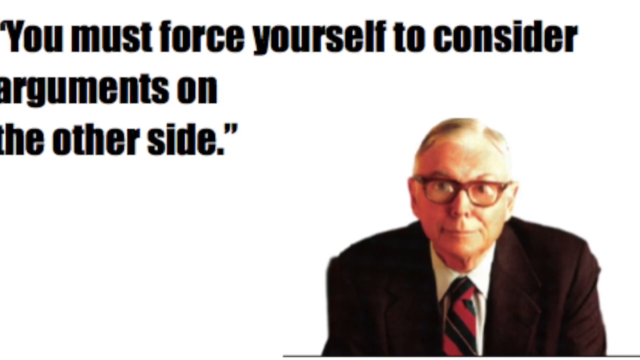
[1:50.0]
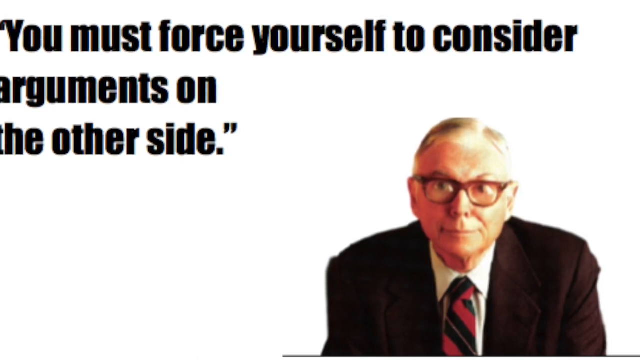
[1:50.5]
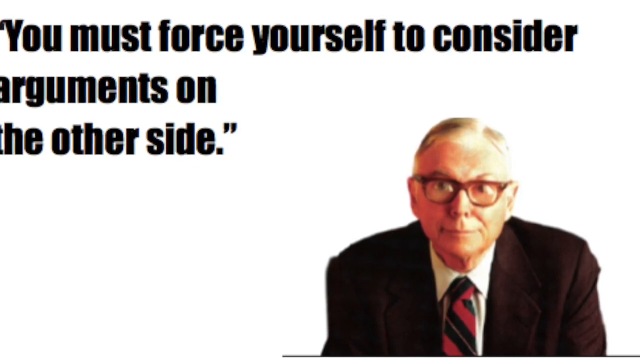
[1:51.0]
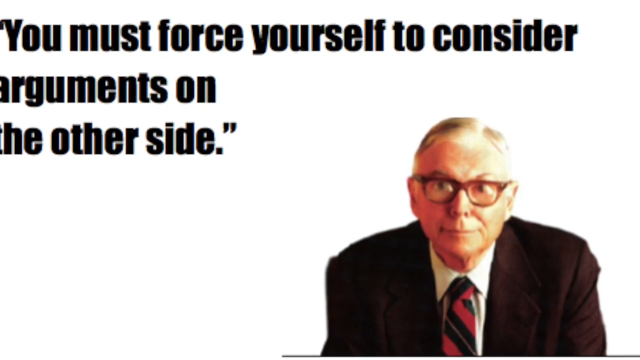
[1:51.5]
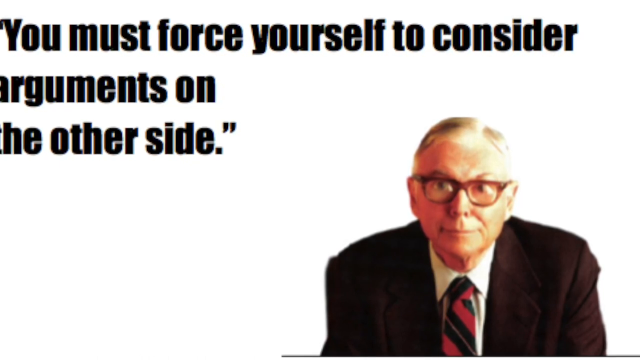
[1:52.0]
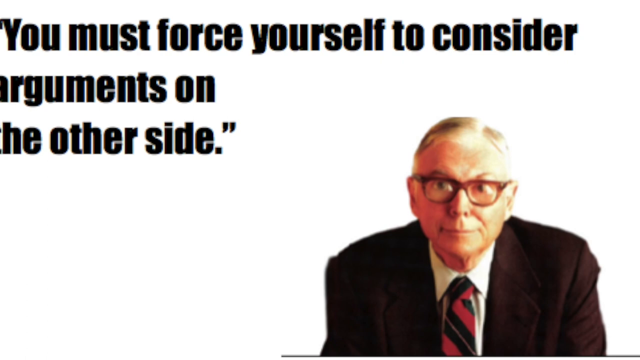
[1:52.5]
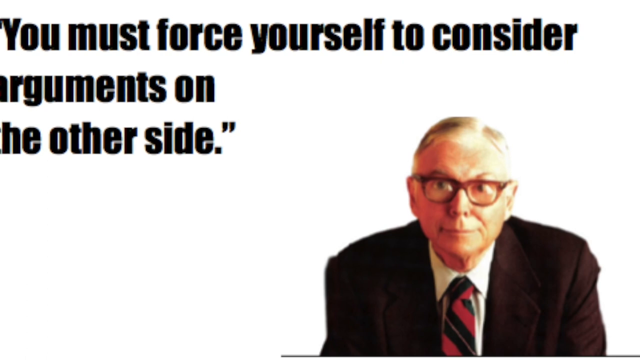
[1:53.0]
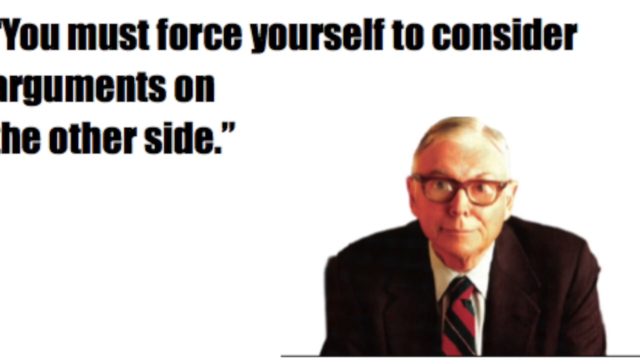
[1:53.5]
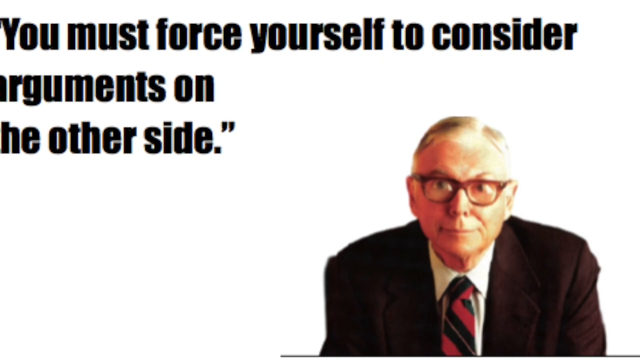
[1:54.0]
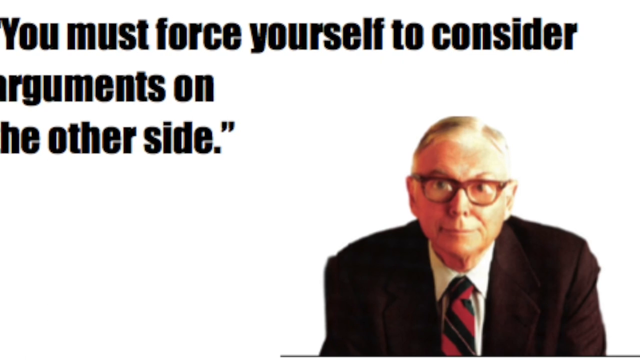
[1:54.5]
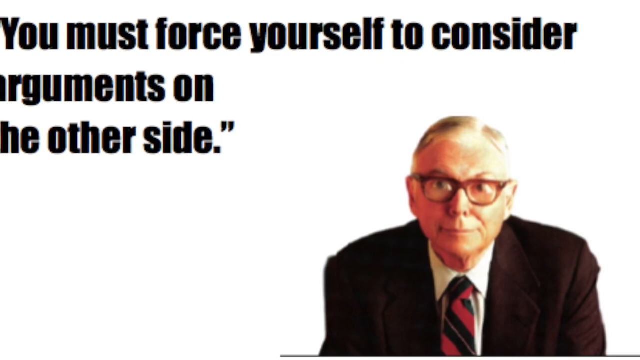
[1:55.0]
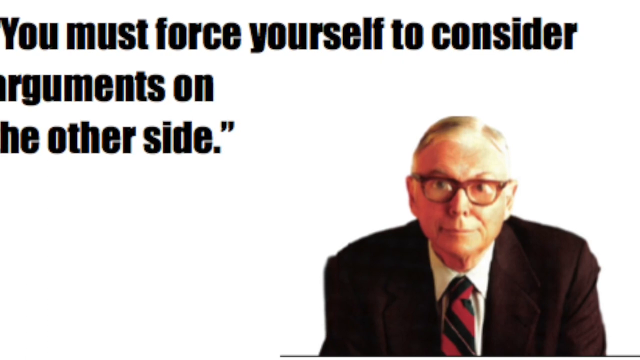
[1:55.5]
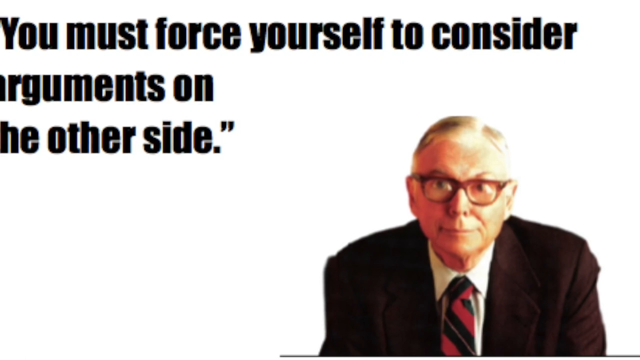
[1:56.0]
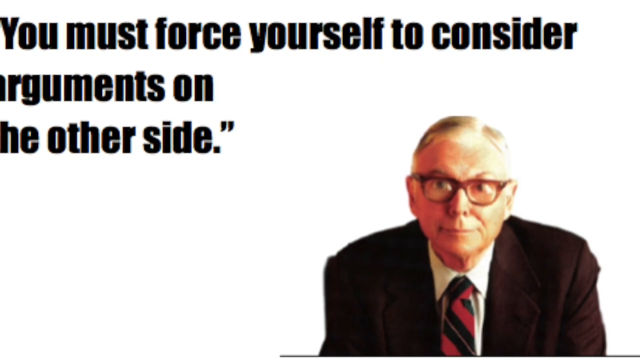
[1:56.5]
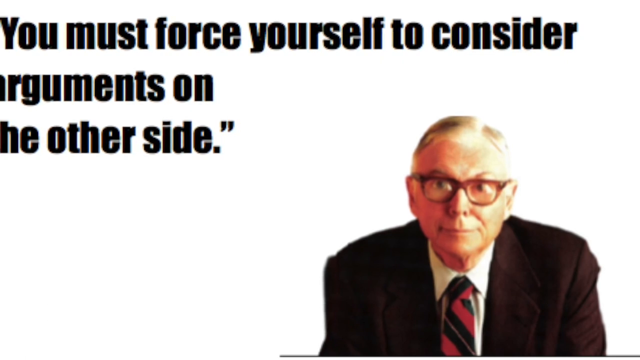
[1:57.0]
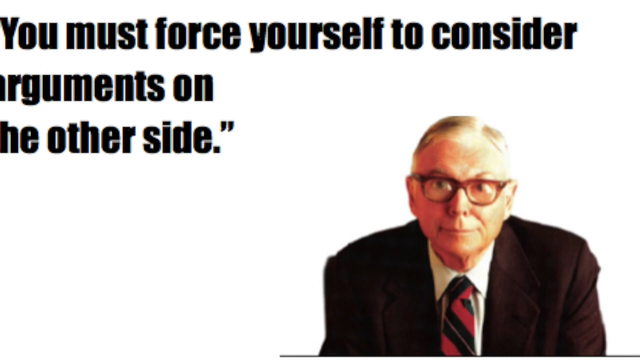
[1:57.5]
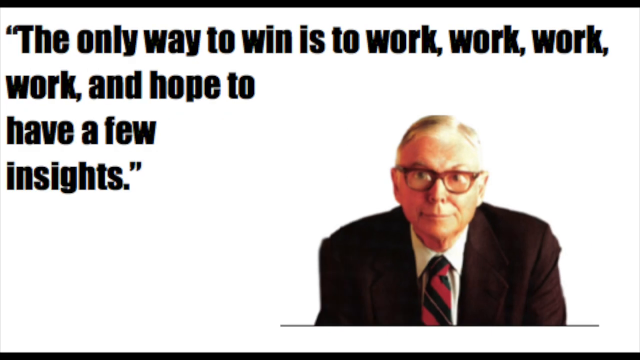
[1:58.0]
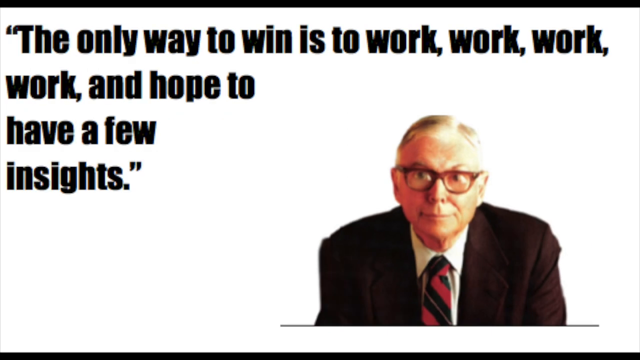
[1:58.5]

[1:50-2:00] The quote with one line across the top and two small lines under it, in big bold blocky letters, stays on screen: "you must force yourself to consider arguments on the other side," as the view slowly and very slightly moves in toward the man's image in the bottom right. Then he is back in his normal position, and across the top, in big, bold, blocky black letters, one line goes all the way across with three short lines underneath: "the only way to win is to work, work, work, work and hope to have a few insights."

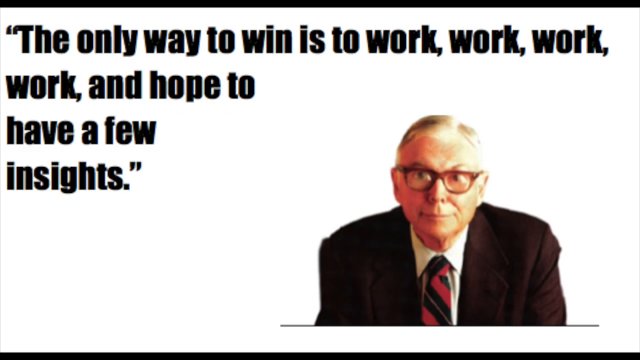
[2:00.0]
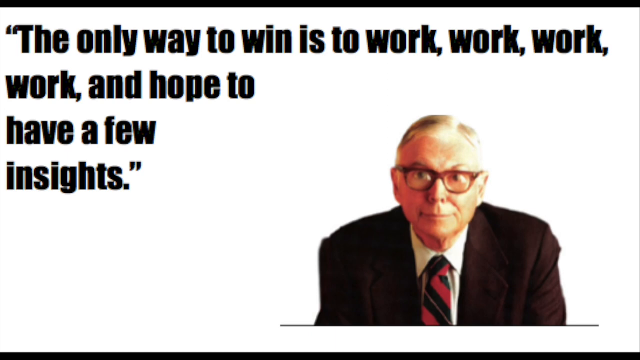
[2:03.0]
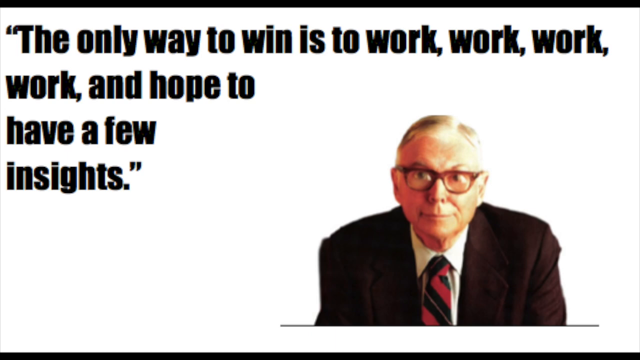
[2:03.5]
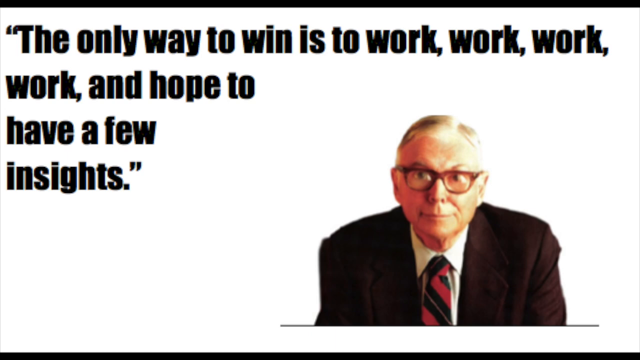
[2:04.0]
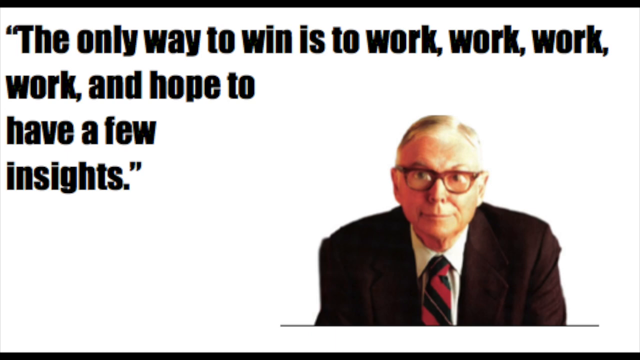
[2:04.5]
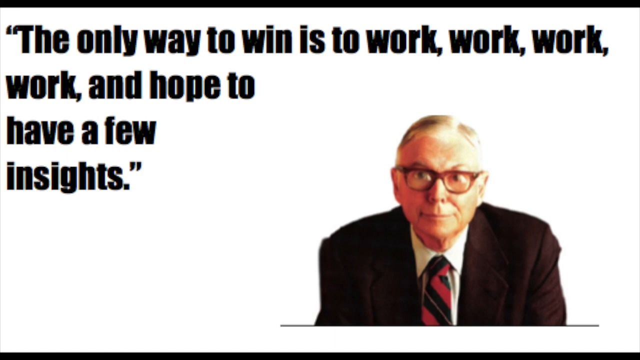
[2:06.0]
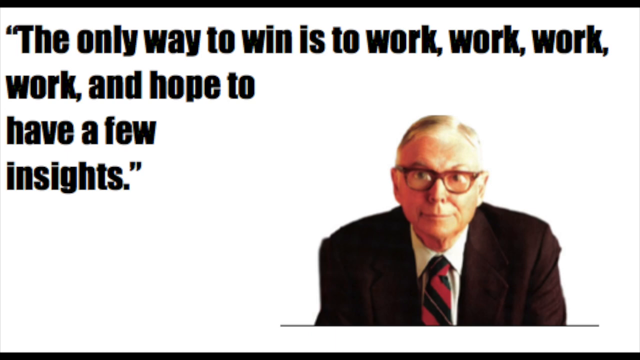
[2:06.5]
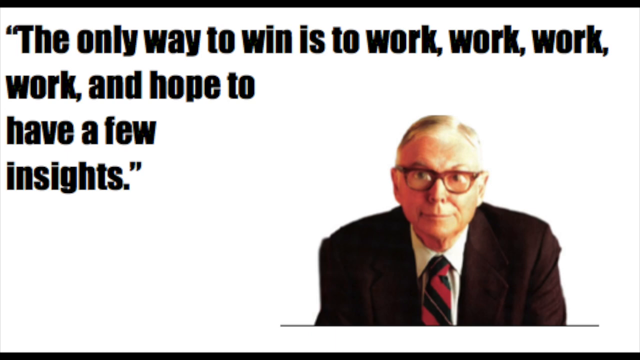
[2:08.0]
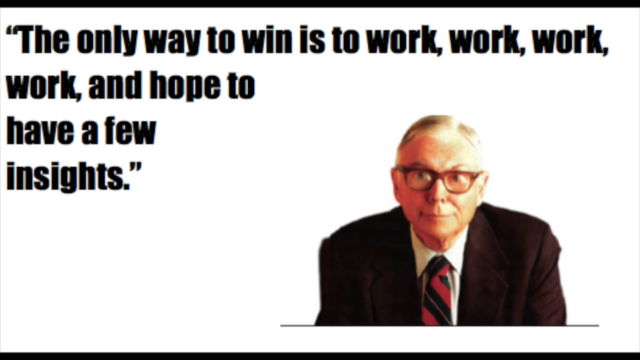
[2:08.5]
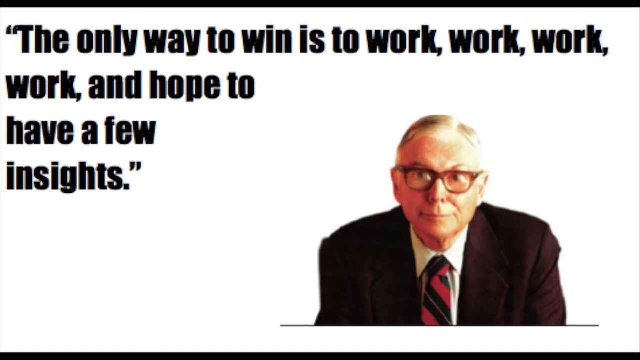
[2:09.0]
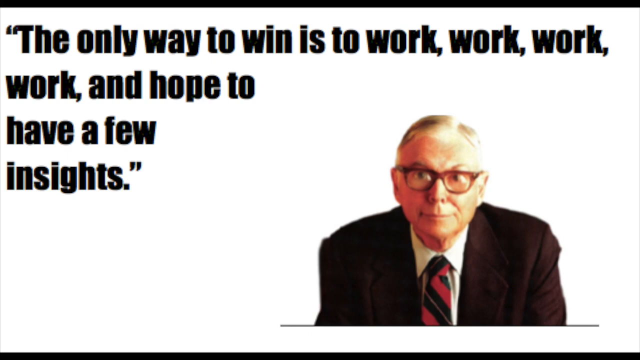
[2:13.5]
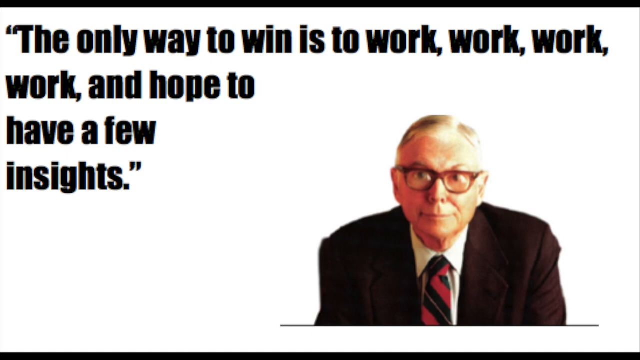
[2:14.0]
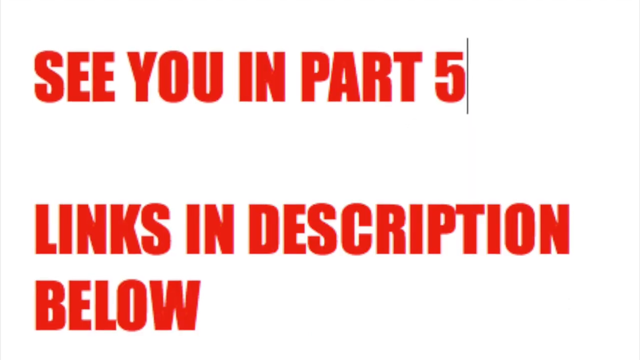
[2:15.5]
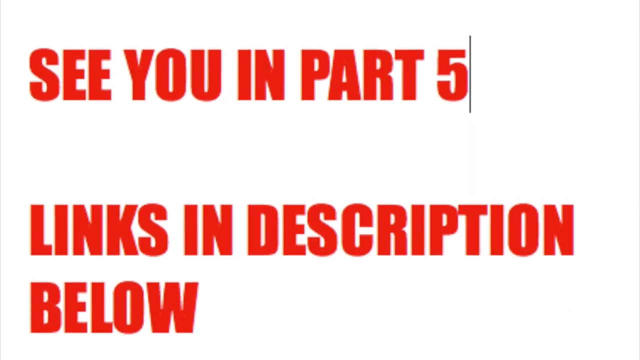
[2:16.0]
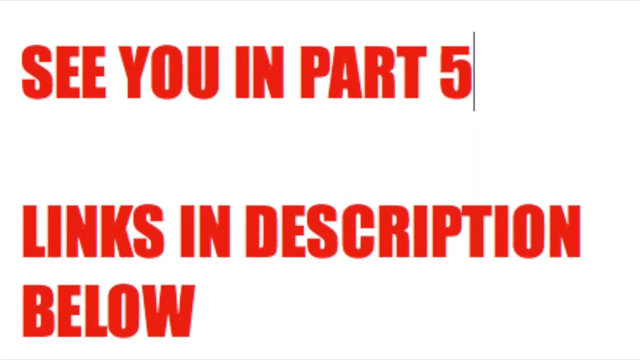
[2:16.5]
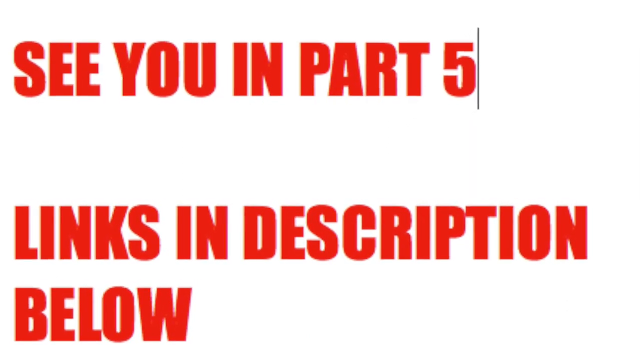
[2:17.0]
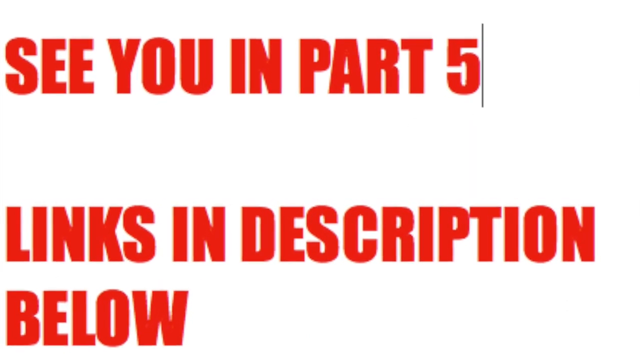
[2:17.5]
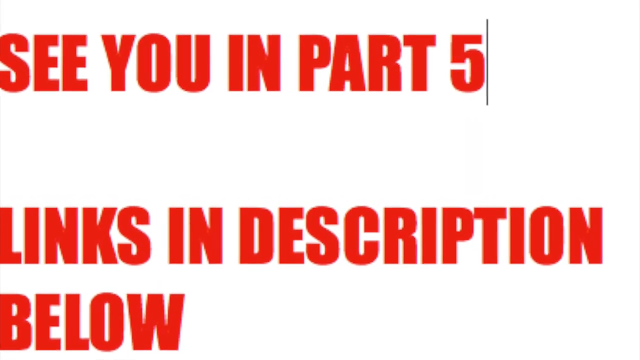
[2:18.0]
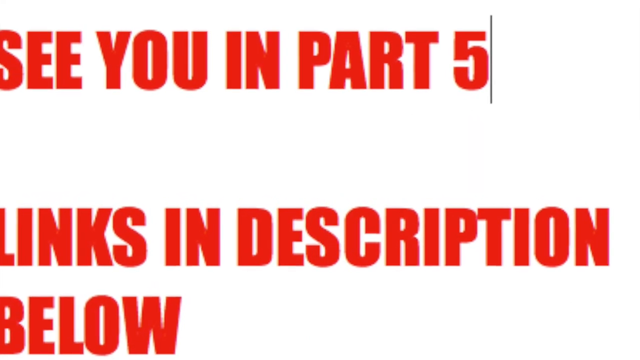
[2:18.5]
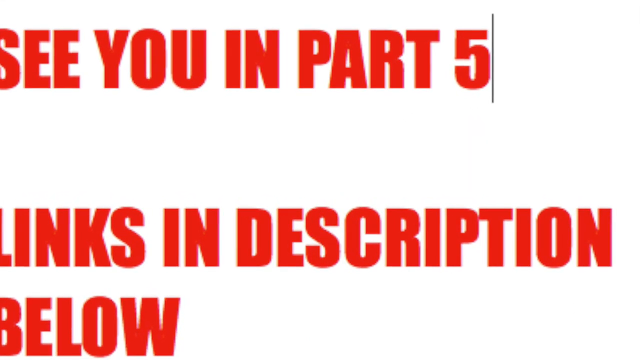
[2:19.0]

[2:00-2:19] The same quote is on screen with the man toward the bottom right, in big, bold, blocky letters: one line all the way across and three short lines underneath, reading "the only way to win is to work, work, work, work, and hope to have a few insights." The video then goes to a white background. Big, bold, blocky red letters across the top, all capitalized, read "CU in part 5" as the view slowly zooms in. After a small gap, more big, blocky red lettering, also all capitalized, reads "links in description below" as it slowly pans in. The man has his hair parted just above his right eyebrow, kind of long on top and shaved pretty short on the side. He wears red glasses, a sports coat, a white shirt and a red and black tie, with his eyebrows raised and his head leaning a little forward and in.